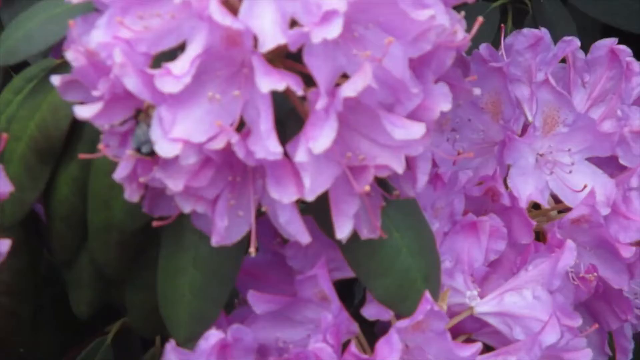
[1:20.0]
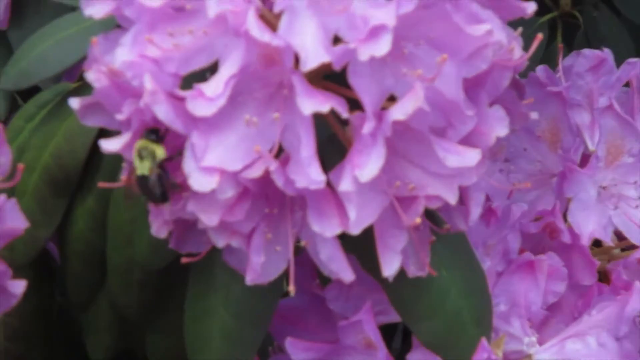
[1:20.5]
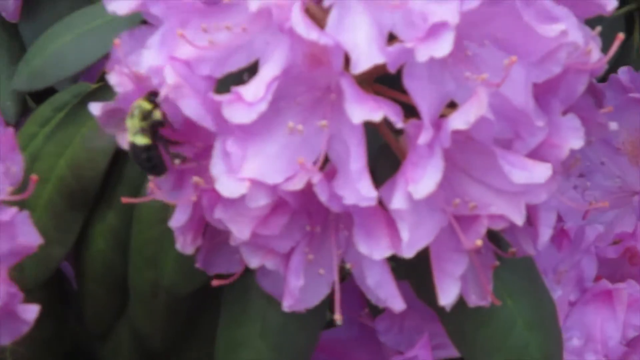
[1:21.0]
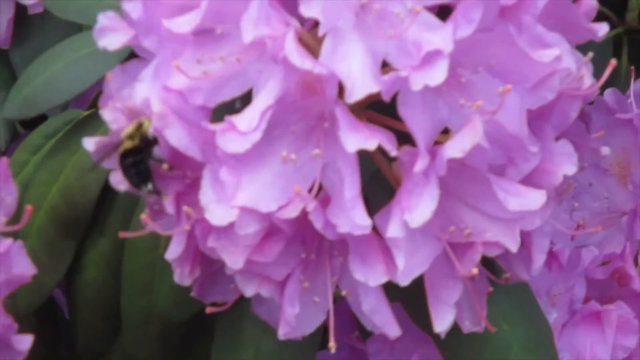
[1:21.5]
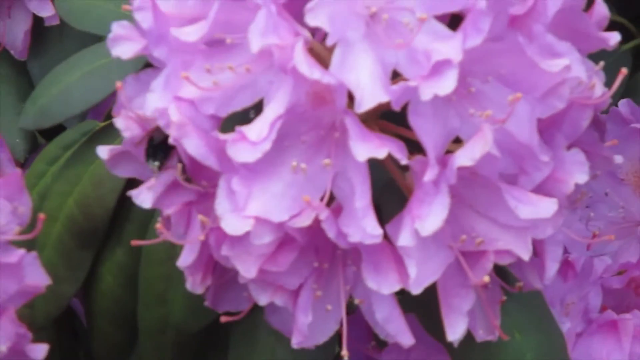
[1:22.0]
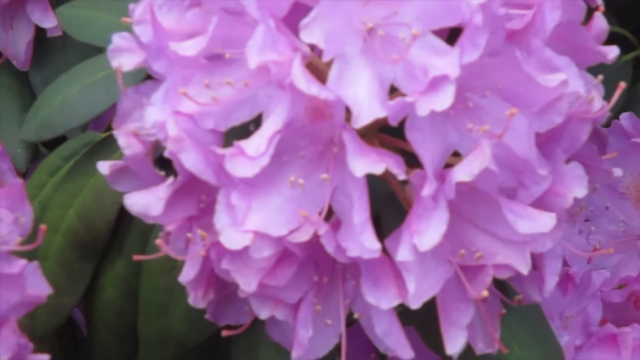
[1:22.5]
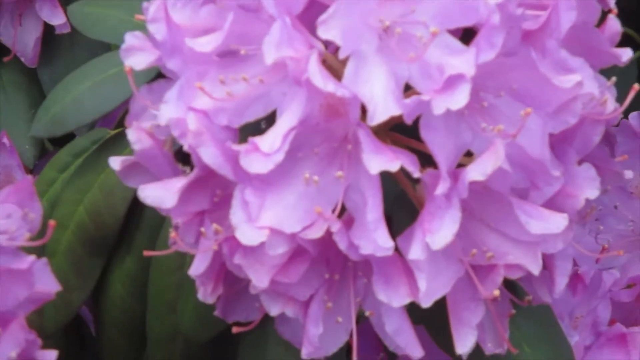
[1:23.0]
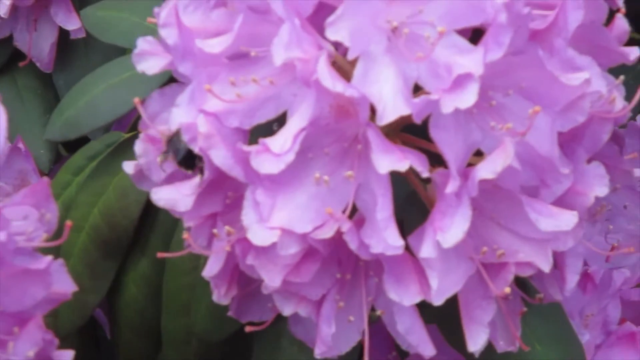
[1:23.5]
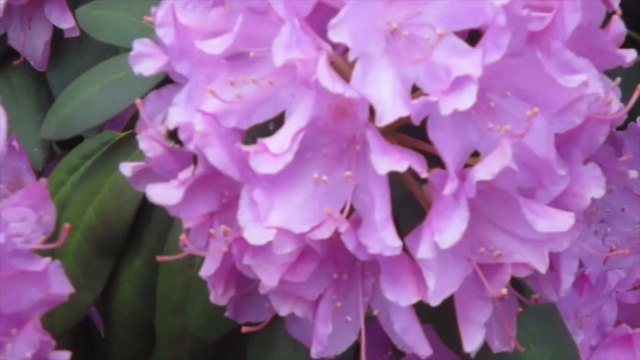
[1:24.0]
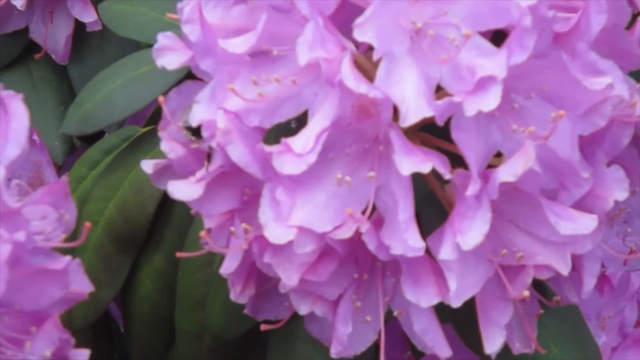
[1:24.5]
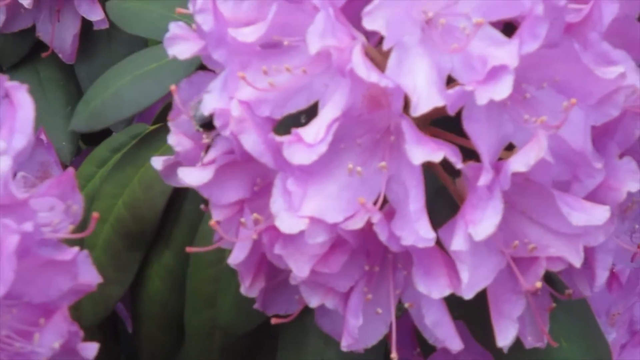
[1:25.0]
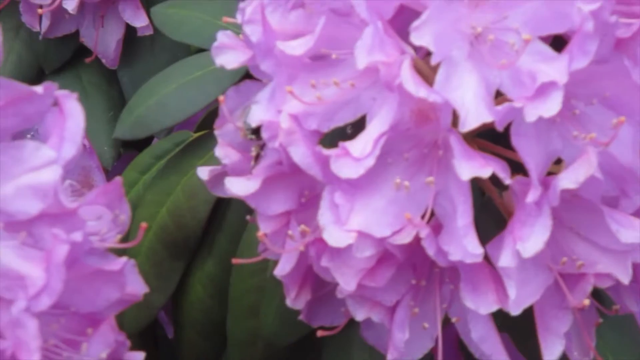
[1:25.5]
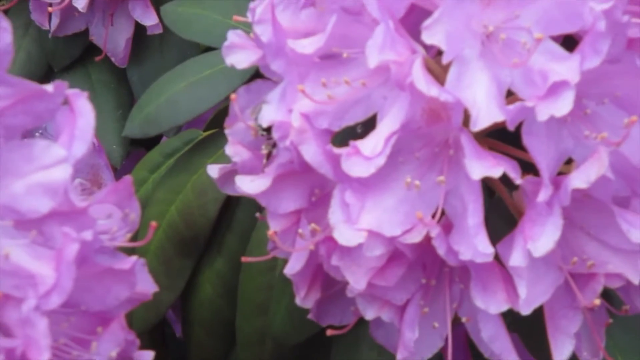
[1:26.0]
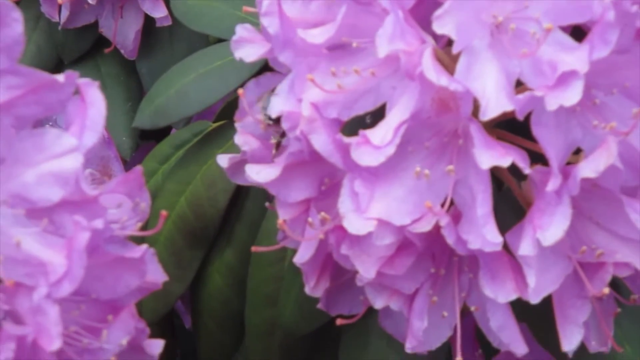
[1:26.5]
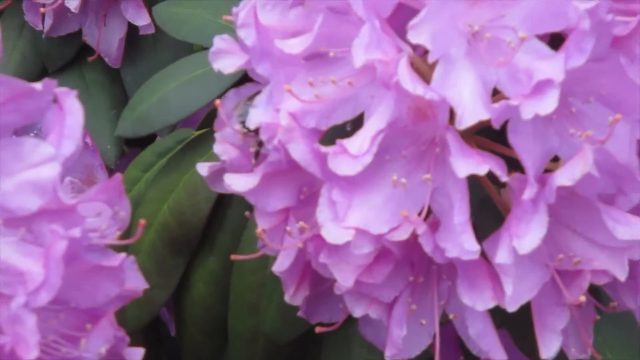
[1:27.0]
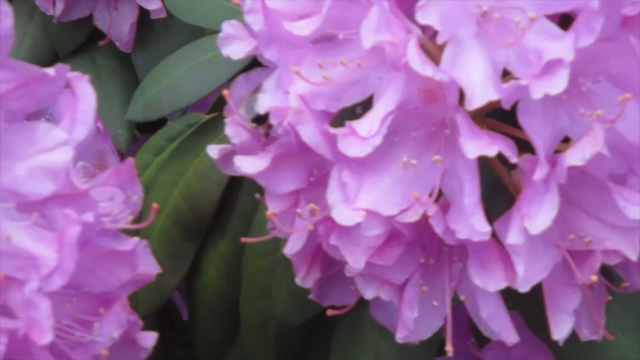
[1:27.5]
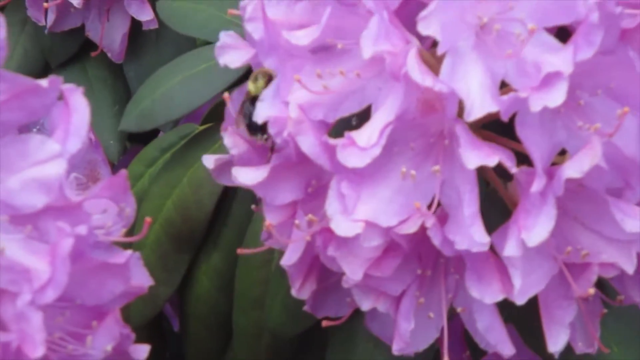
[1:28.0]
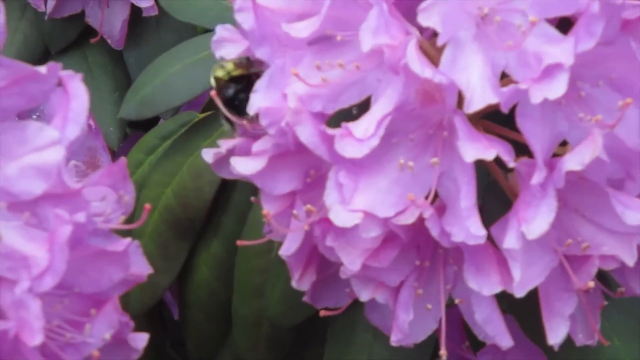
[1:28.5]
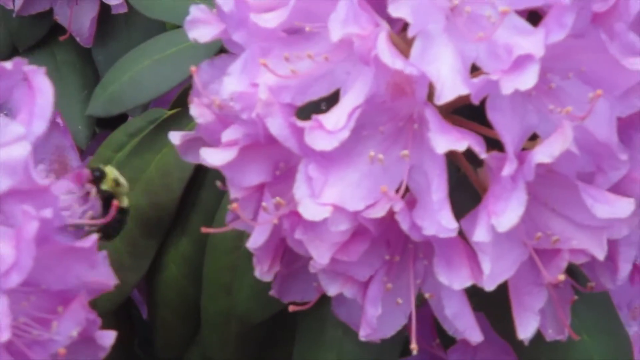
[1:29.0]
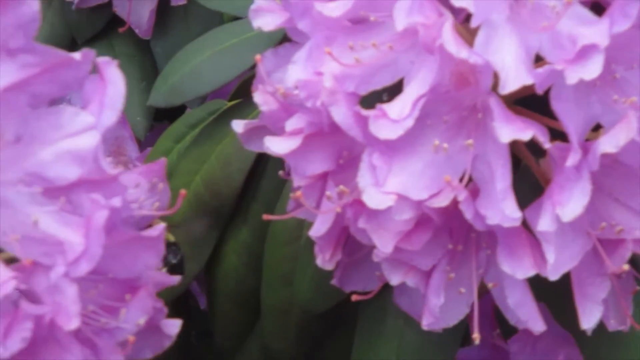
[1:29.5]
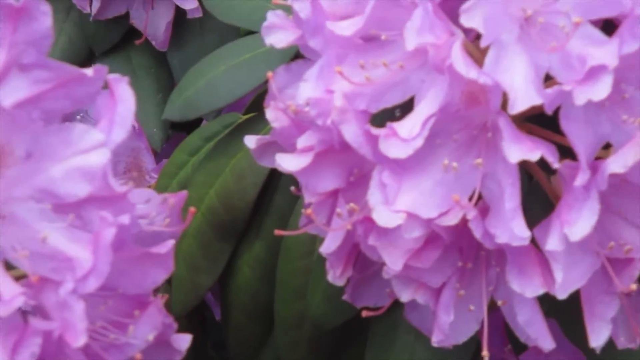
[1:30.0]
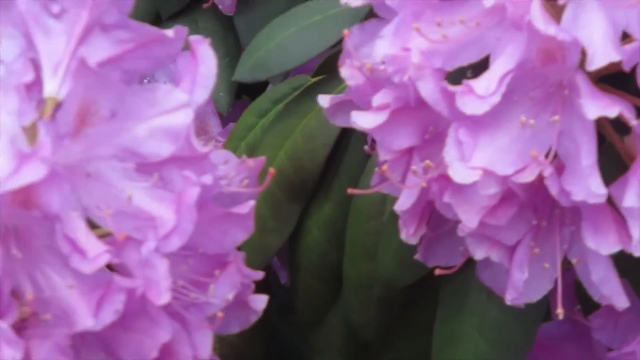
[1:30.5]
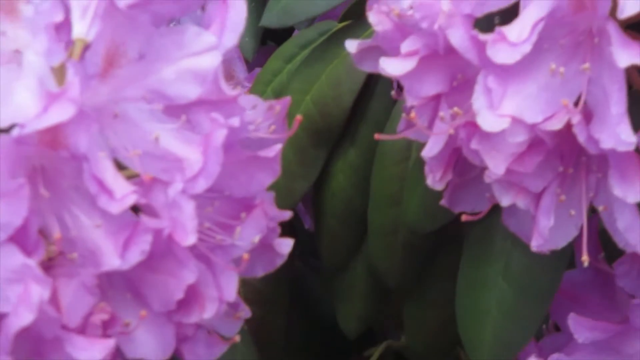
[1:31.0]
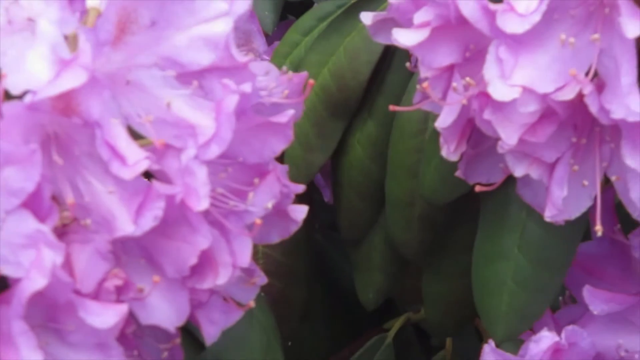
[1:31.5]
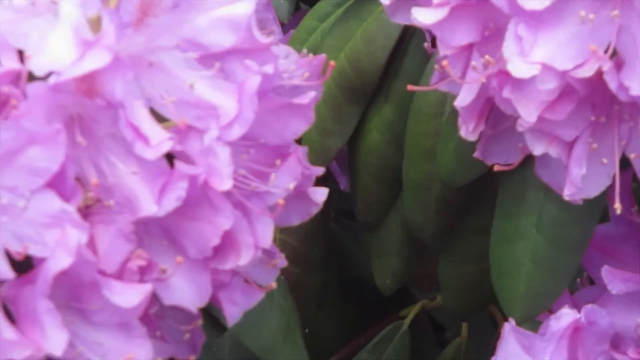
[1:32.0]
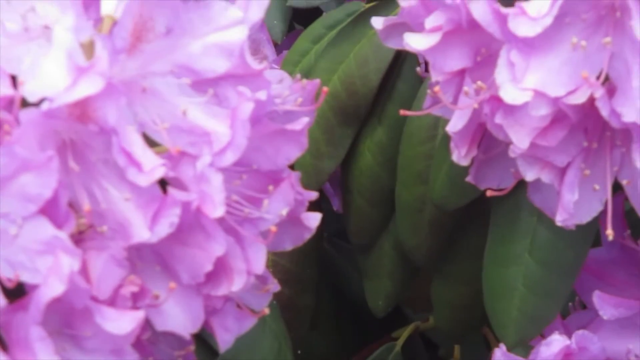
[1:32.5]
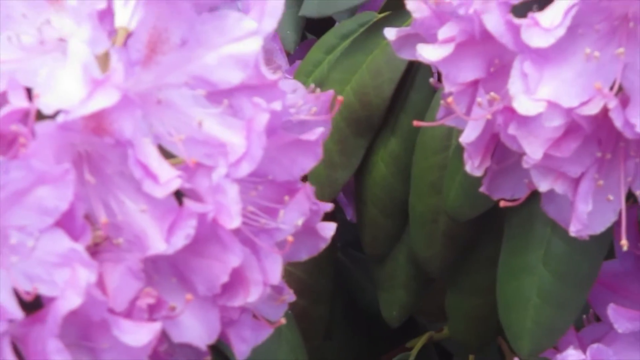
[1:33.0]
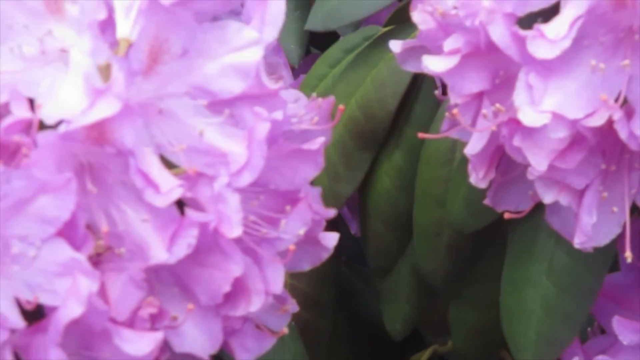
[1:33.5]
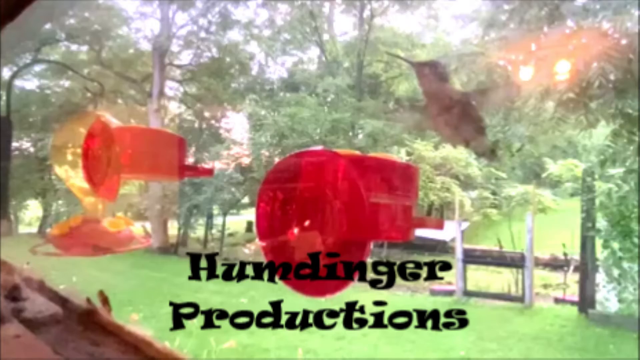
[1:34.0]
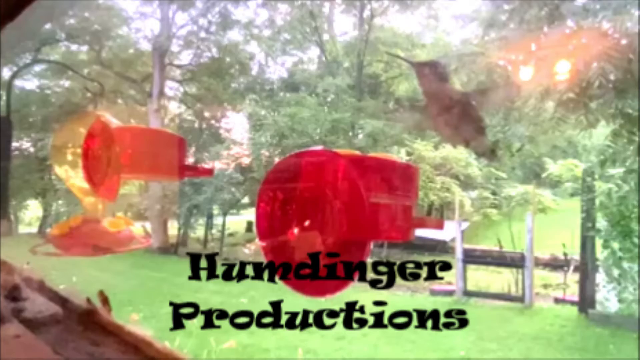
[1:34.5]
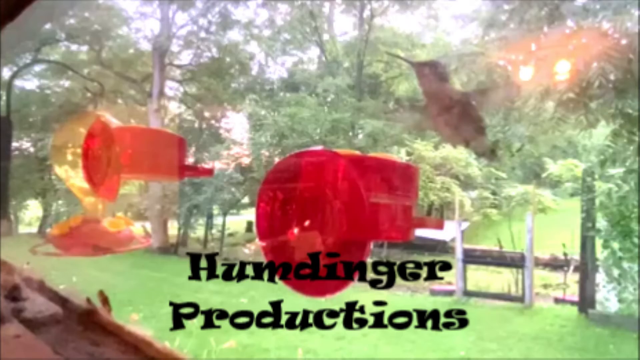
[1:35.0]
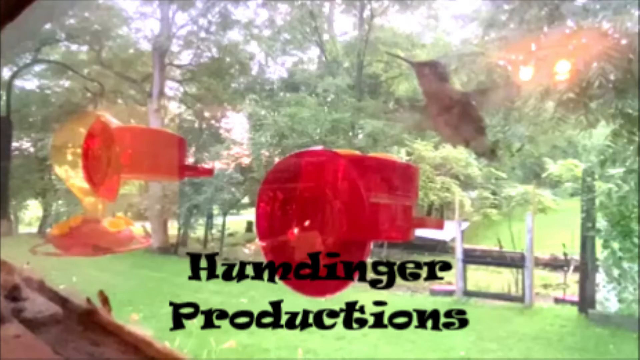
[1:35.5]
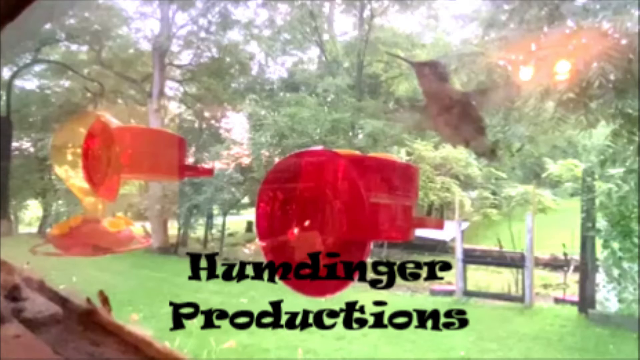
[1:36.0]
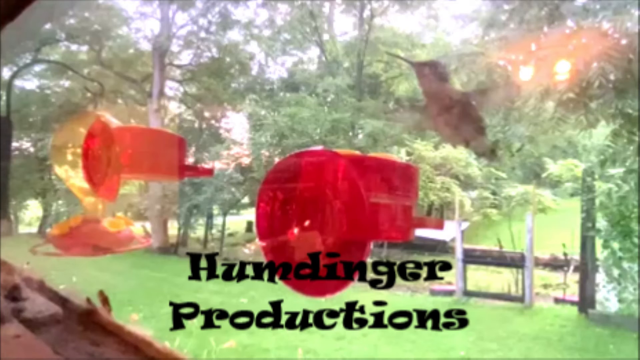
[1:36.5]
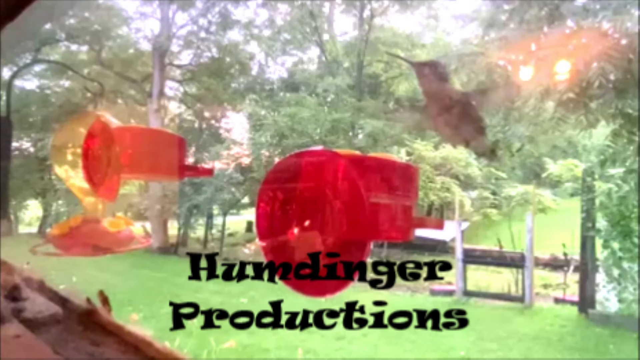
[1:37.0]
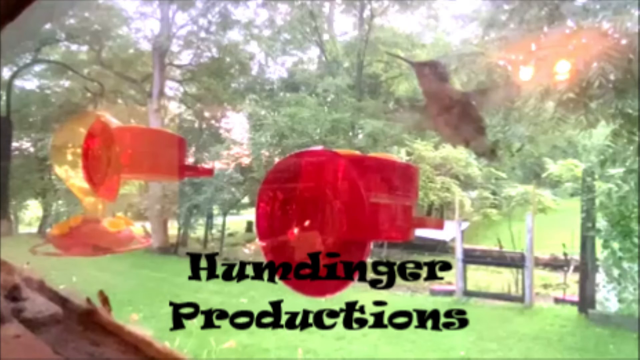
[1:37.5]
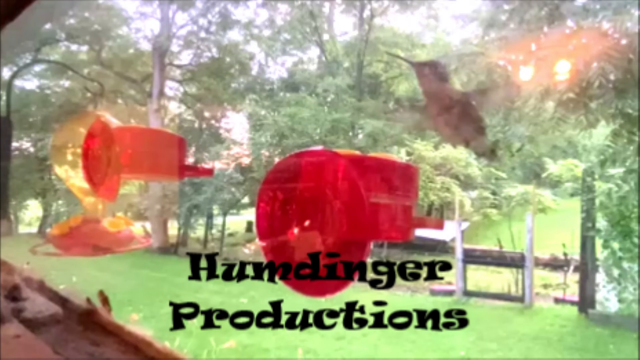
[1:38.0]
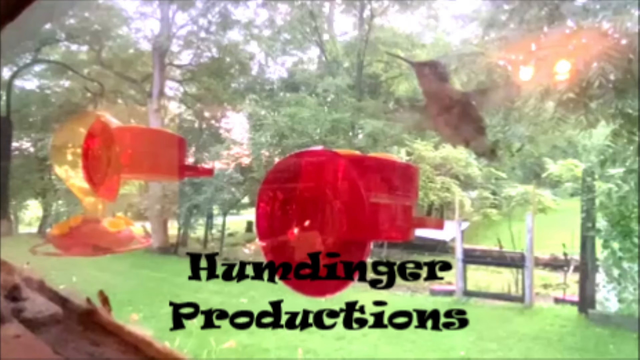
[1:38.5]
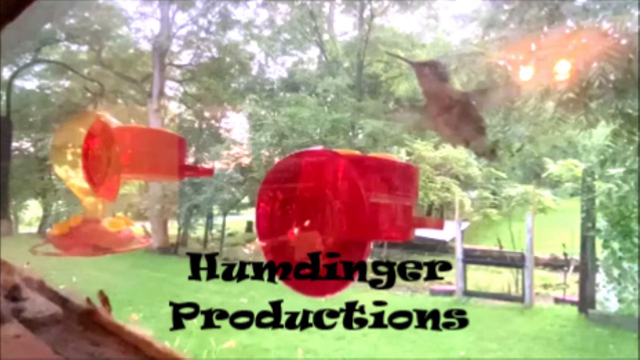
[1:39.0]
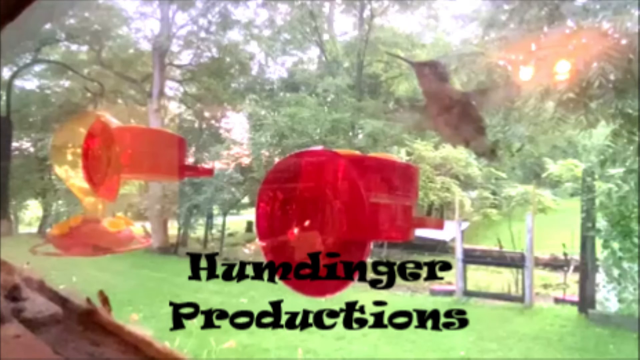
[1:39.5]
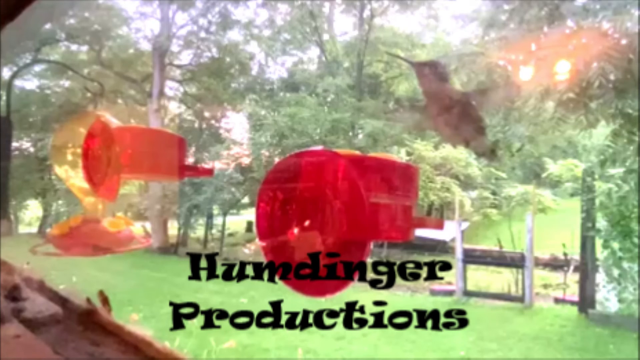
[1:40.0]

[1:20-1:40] Another view of rhododendrons shows a bee on one of them, with green leaves in the background. The rhododendrons are light purple flowers that form in clusters along a bush or a plant. The camera shakily zooms in on a yellow and black bee crawling on the side of one of the flowers, rapidly moving its arms and wings. It crawls all in them and into the center, probably collecting pollen, then flies off to the left, lands on another flower, and crawls around out of frame behind the flowers. The video ends with a still image looking out of a window, where hummingbird feeders are attached to the outside of the window by suction, and a hummingbird is mid-flight near one of the feeders. A graphic at the bottom of the screen reads "Humdinger Productions" in a comical looking font.